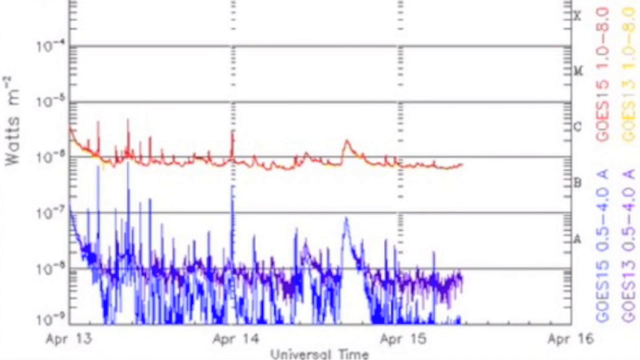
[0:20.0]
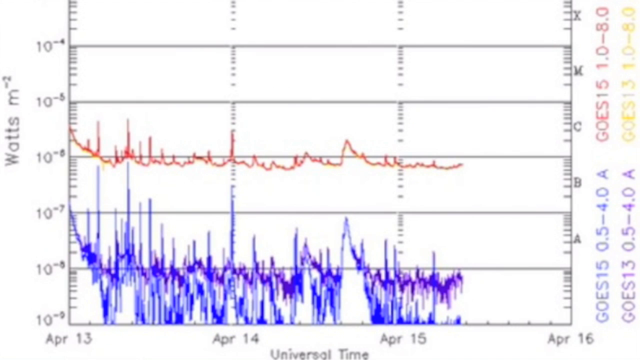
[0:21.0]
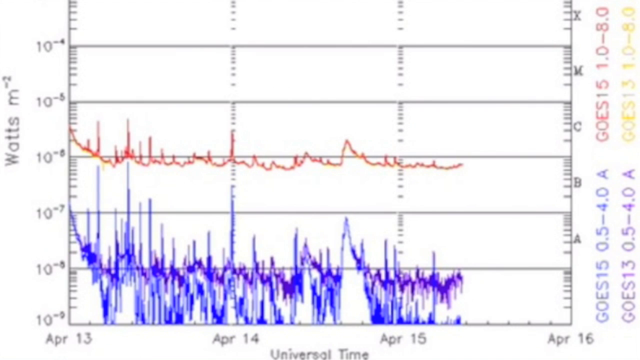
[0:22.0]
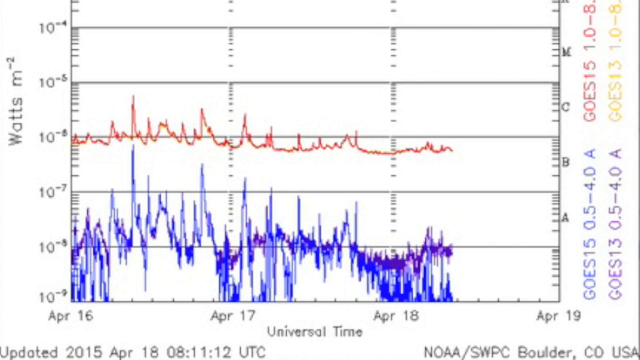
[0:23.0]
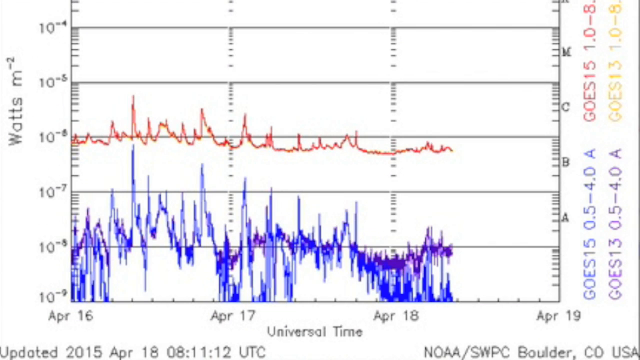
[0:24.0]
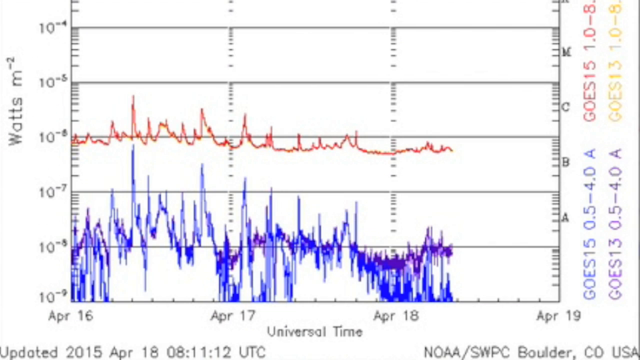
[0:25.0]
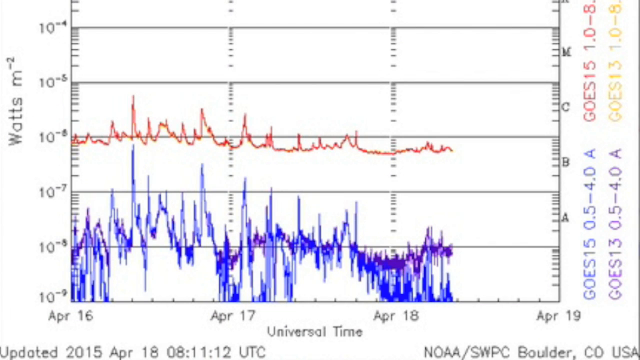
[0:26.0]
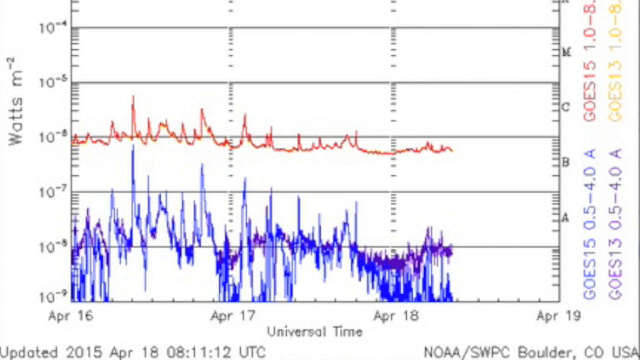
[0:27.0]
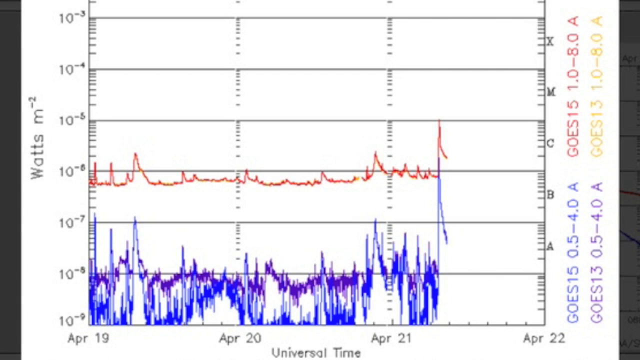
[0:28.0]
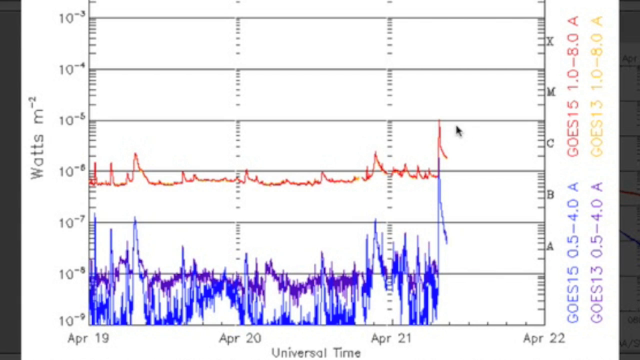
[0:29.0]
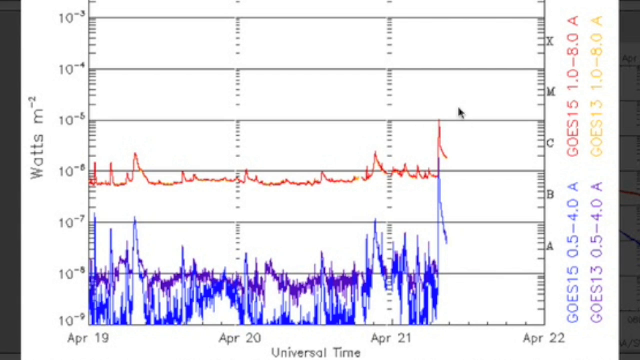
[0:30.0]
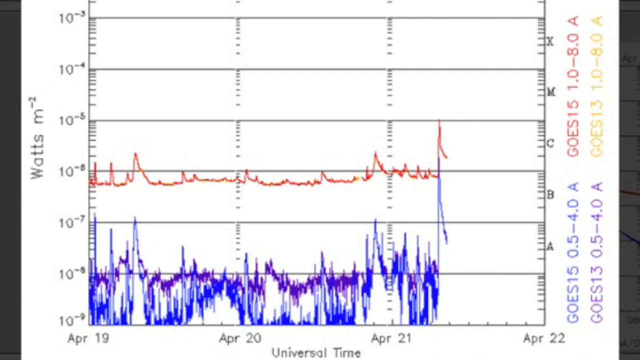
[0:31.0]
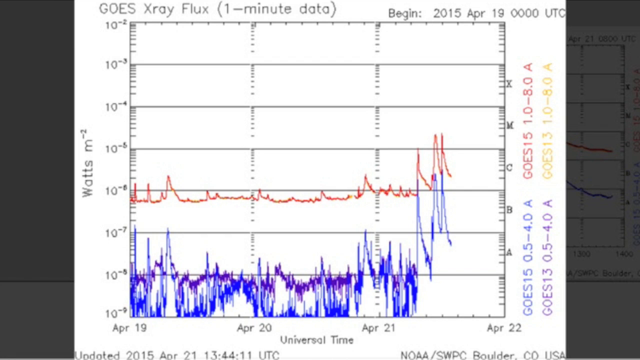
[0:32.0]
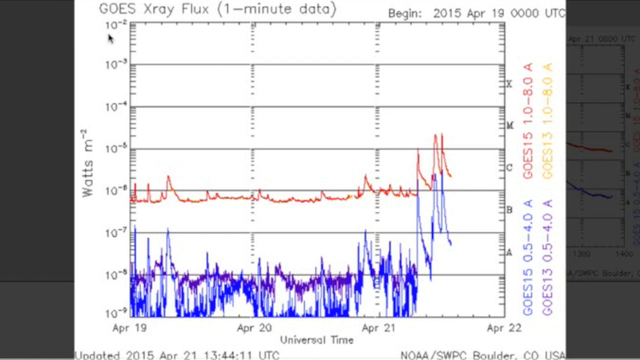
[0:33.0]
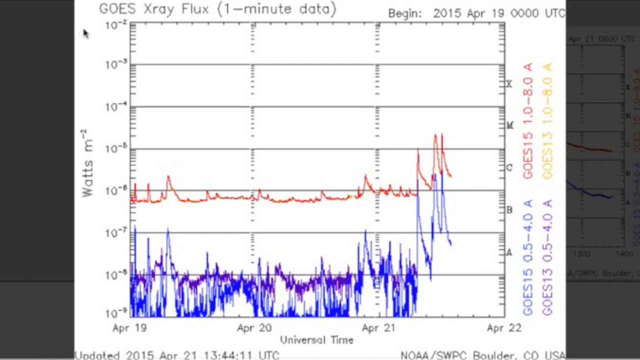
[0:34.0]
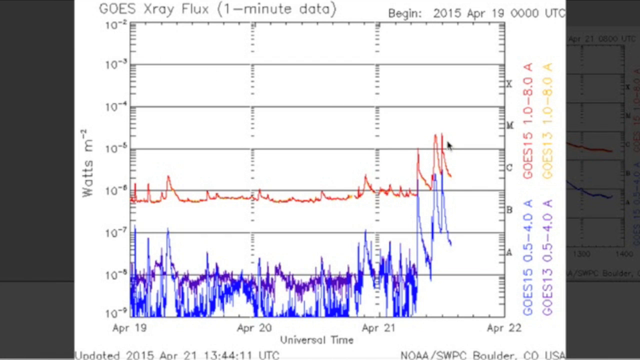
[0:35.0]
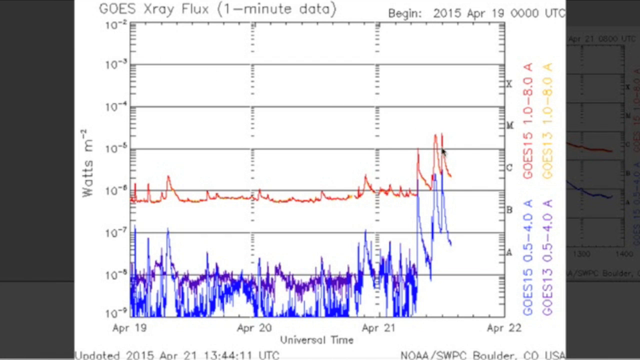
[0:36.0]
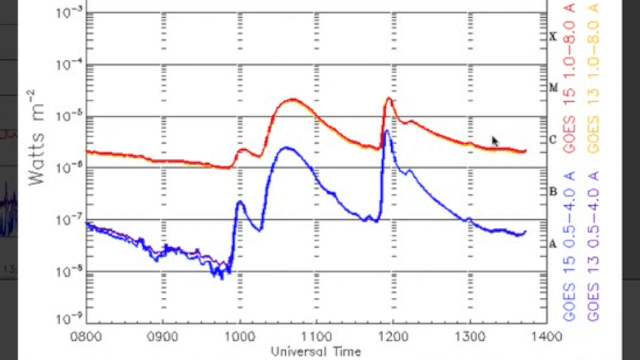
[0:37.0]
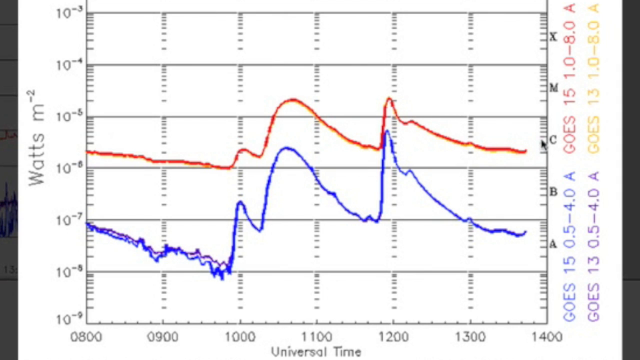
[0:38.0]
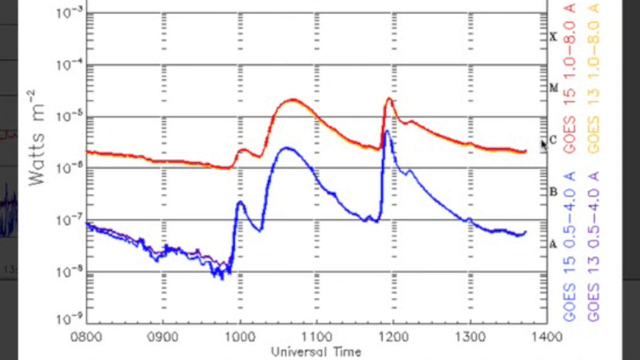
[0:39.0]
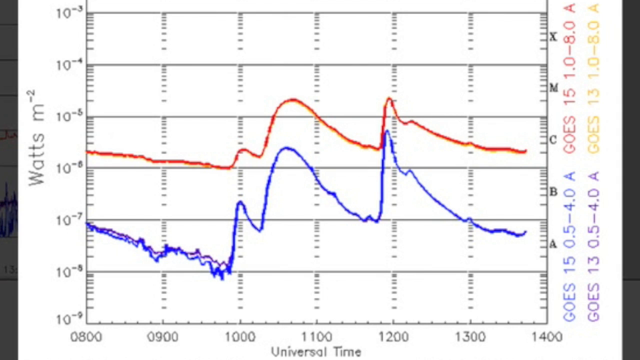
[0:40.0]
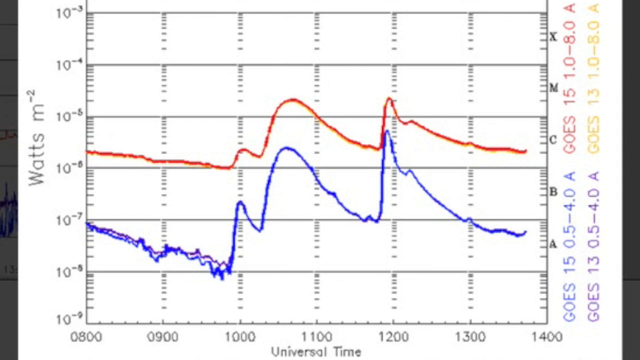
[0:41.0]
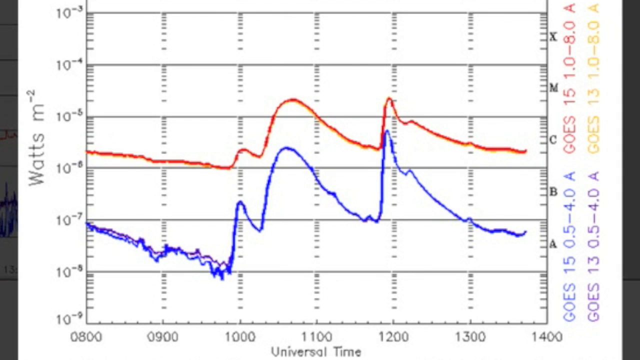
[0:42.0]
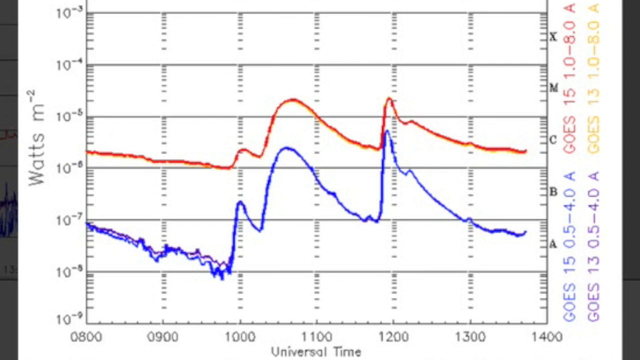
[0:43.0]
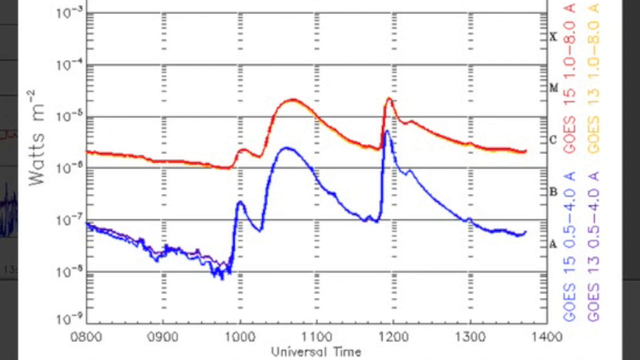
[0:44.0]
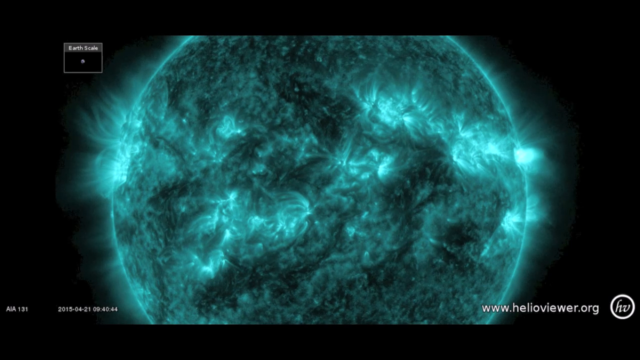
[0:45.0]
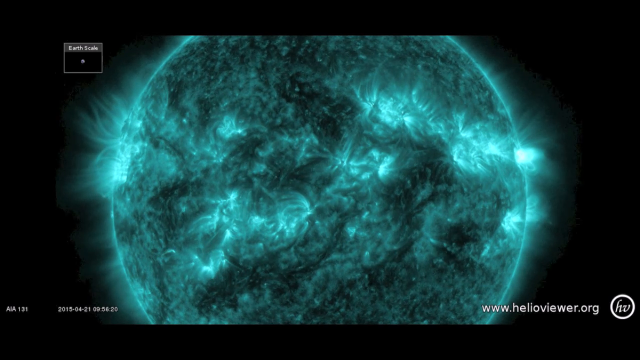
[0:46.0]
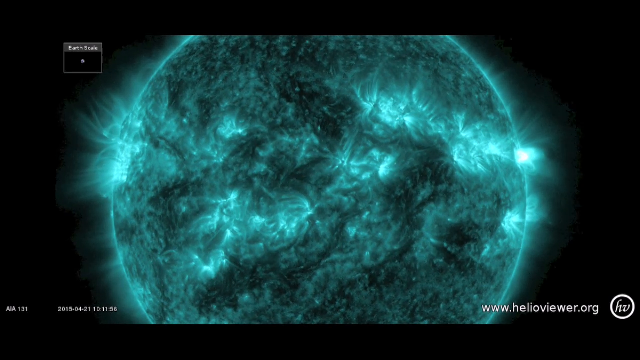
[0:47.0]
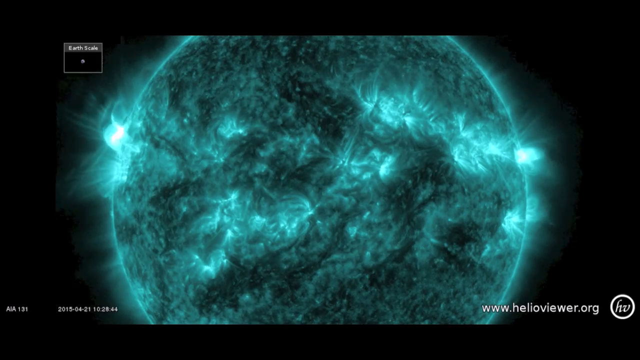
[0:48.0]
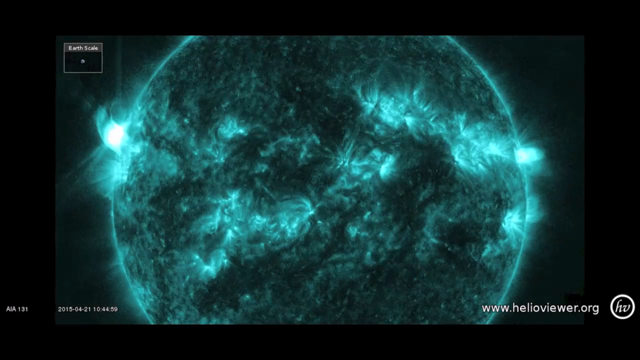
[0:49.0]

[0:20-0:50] On a white background there is a graph sort of like a heartbeat graph, with two lines: a red line at the top and a blue line at the bottom, both squiggling horizontally to the right. The y-axis label on the left reads "watts m to the negative second", and dates from April 13th to April 16th run along the bottom. The video then goes to what looks like a zoomed-out view of the graph, with "universal time" at the bottom, and zooms out again. A black mouse cursor goes to the top right and circles around the right side of the red squiggly lines, highlighting some points along the top. Another line graph follows, with a red line at the top, a blue line at the bottom, and "watts m to the minus two" on it; the black cursor moves to the right and circles on the right of the graph. The scene then transitions to a black background with a glowing teal circle that is black in the middle, with a swirl of black and teal in the middle, glowing.